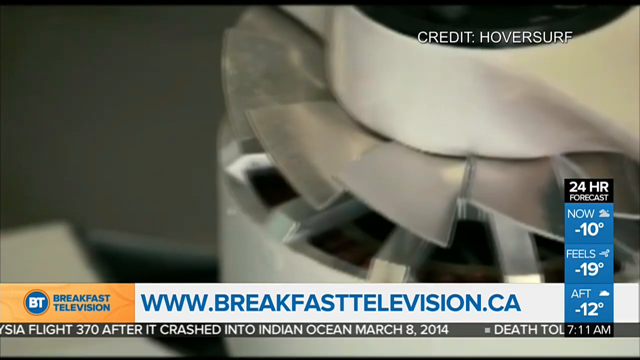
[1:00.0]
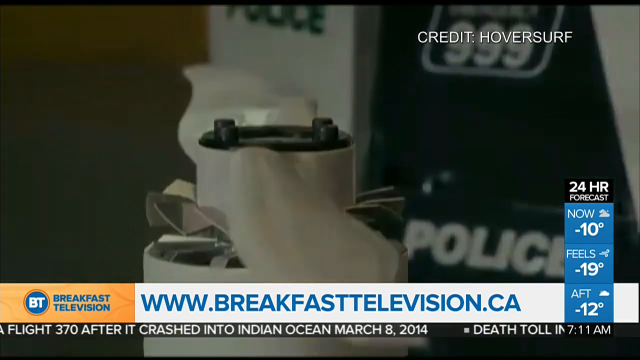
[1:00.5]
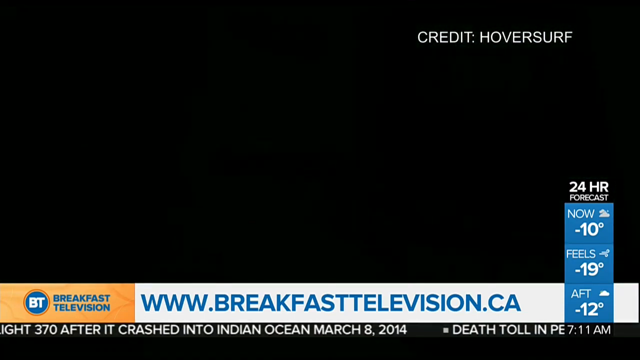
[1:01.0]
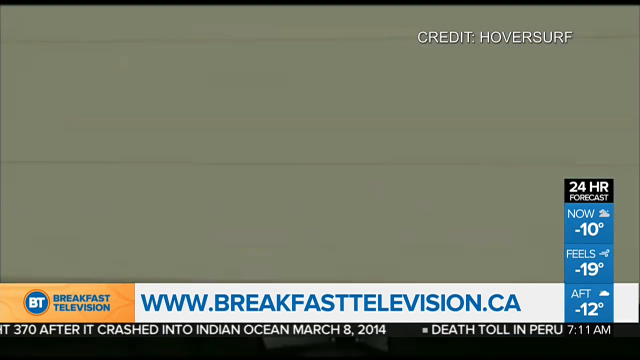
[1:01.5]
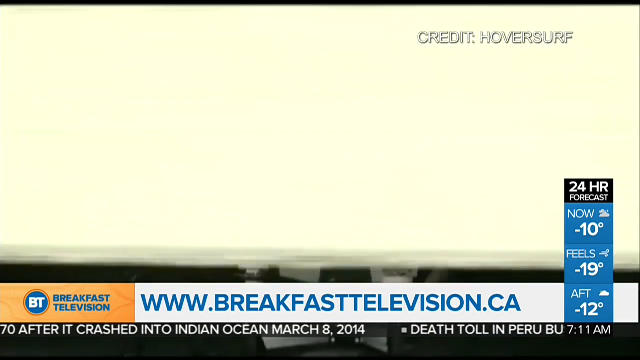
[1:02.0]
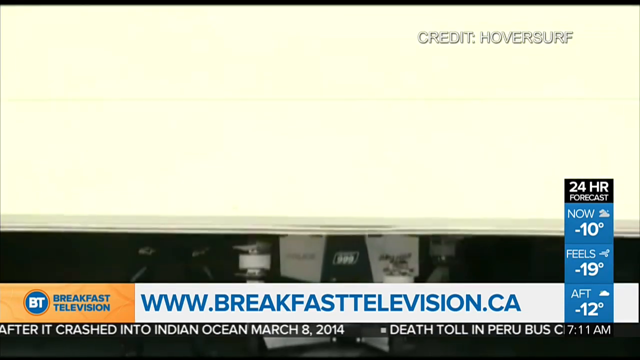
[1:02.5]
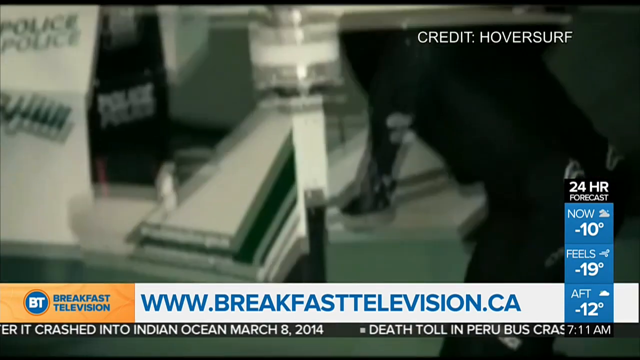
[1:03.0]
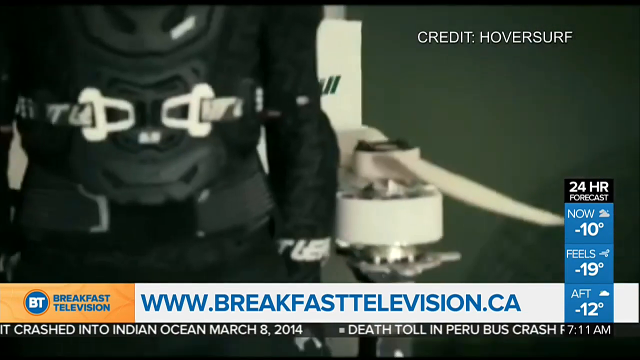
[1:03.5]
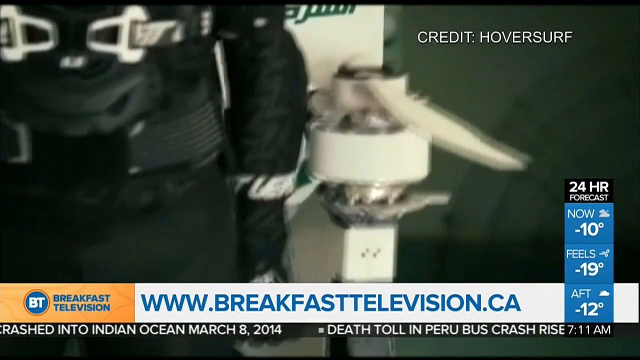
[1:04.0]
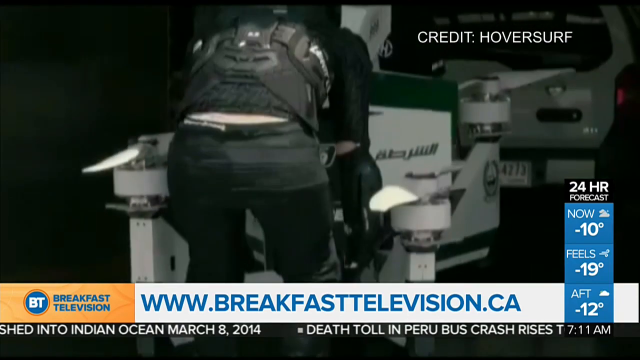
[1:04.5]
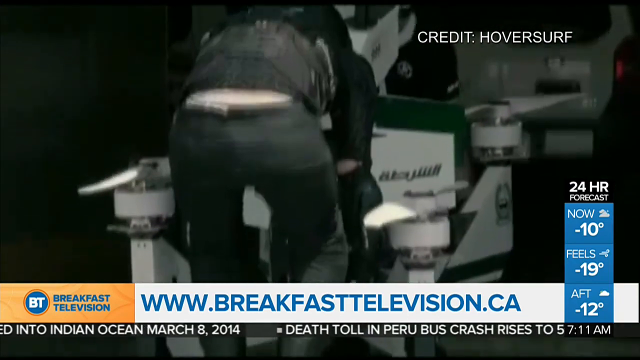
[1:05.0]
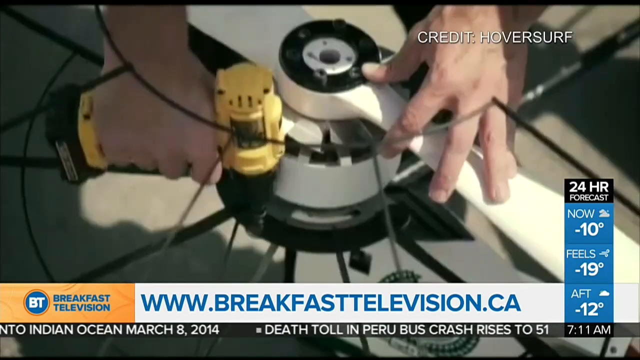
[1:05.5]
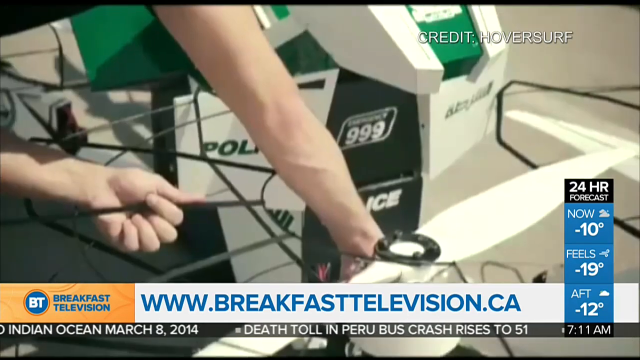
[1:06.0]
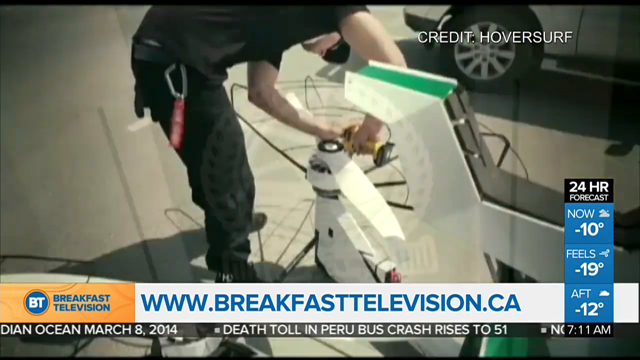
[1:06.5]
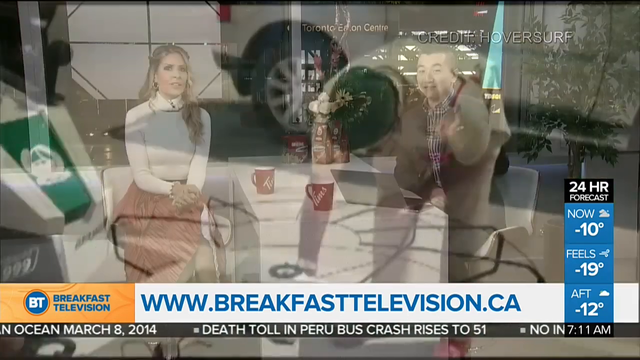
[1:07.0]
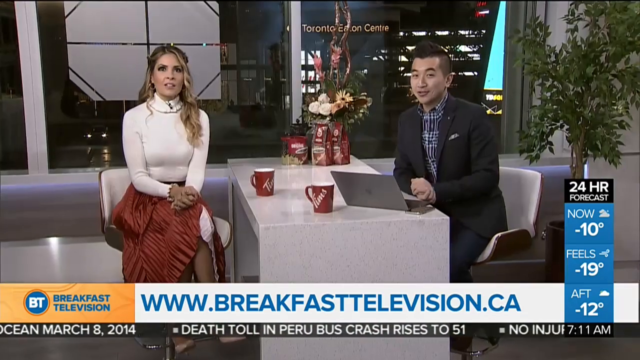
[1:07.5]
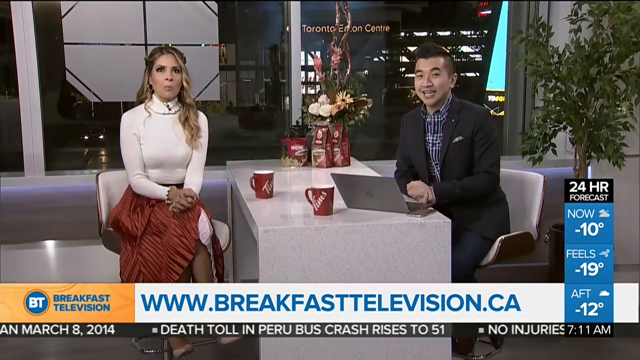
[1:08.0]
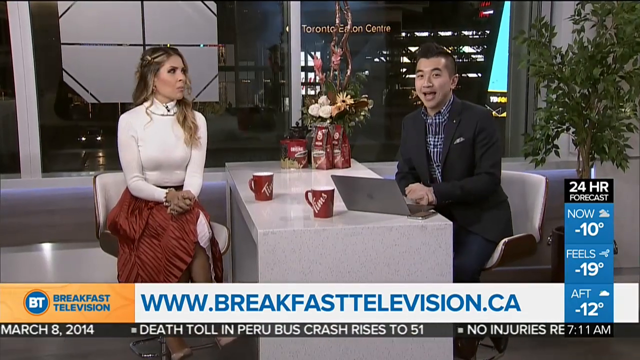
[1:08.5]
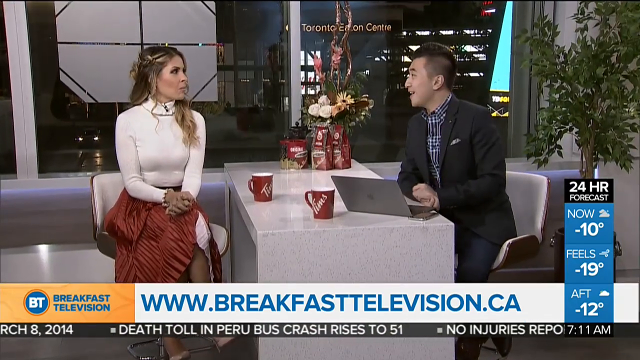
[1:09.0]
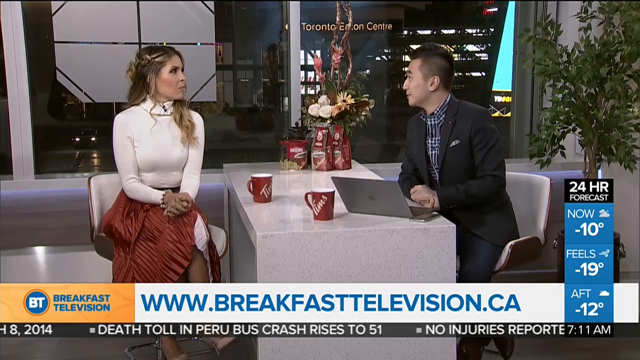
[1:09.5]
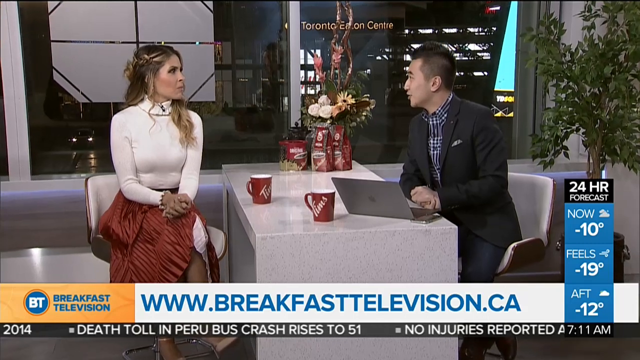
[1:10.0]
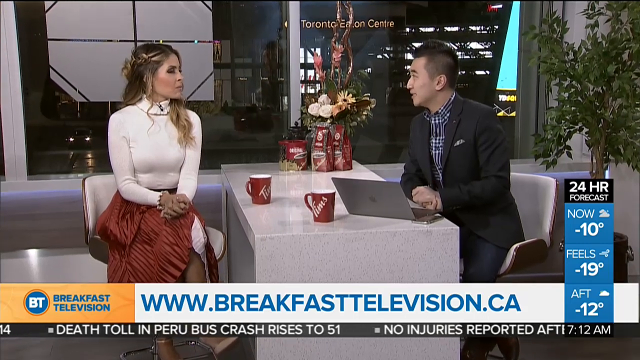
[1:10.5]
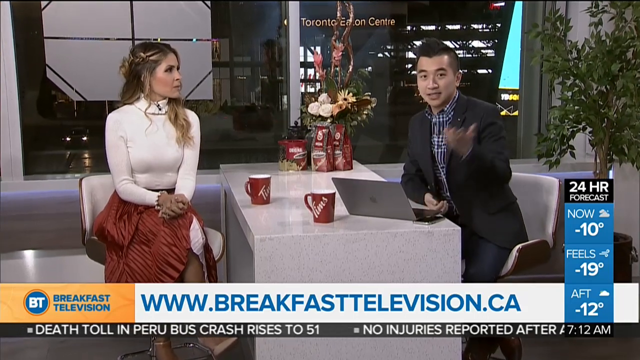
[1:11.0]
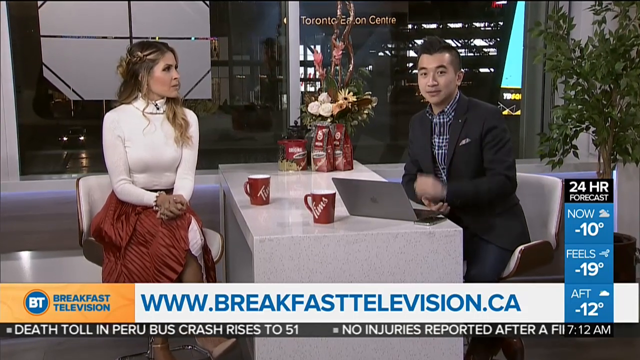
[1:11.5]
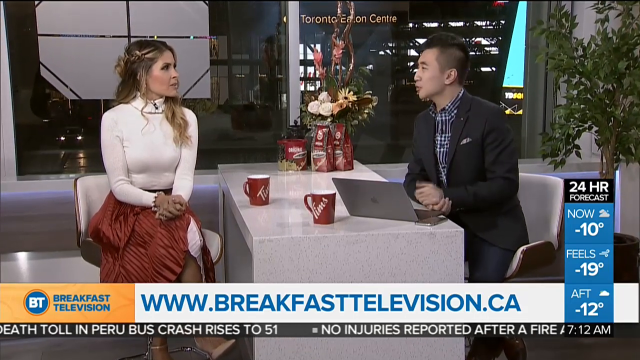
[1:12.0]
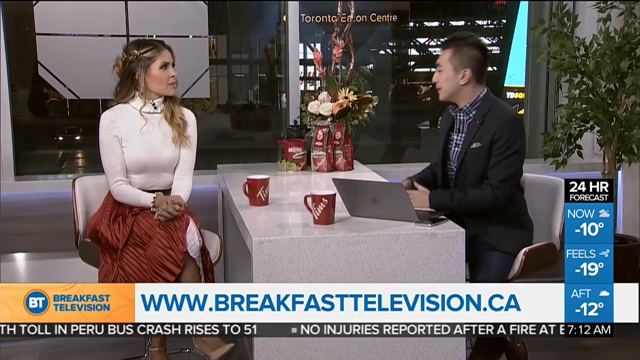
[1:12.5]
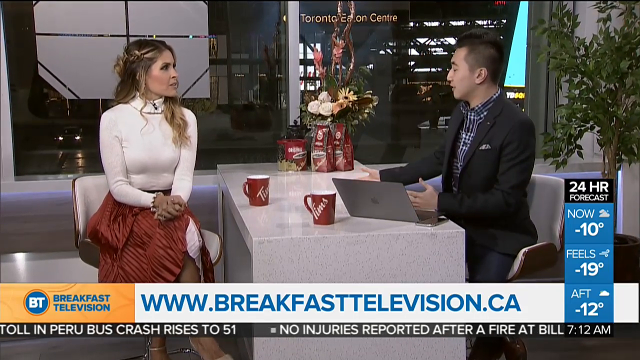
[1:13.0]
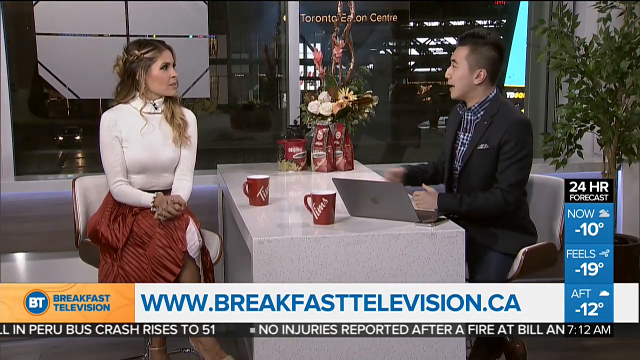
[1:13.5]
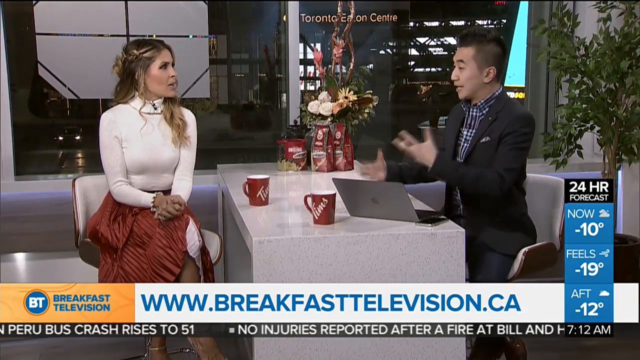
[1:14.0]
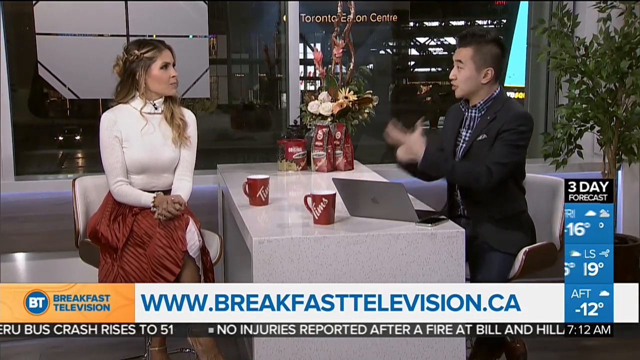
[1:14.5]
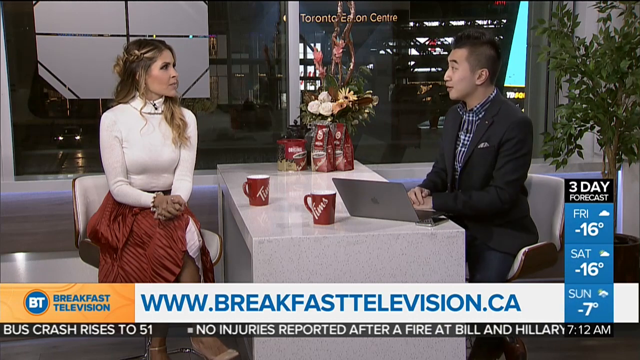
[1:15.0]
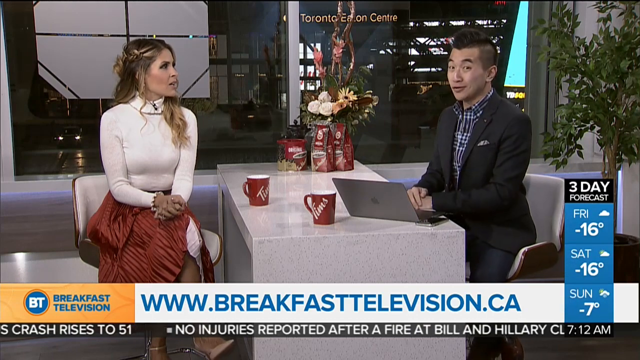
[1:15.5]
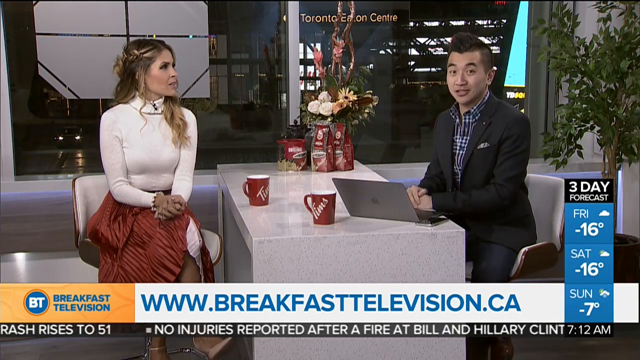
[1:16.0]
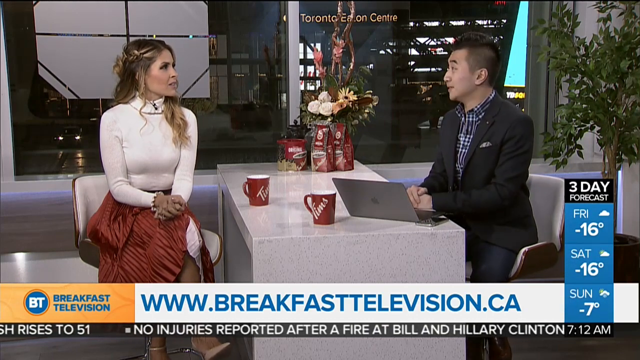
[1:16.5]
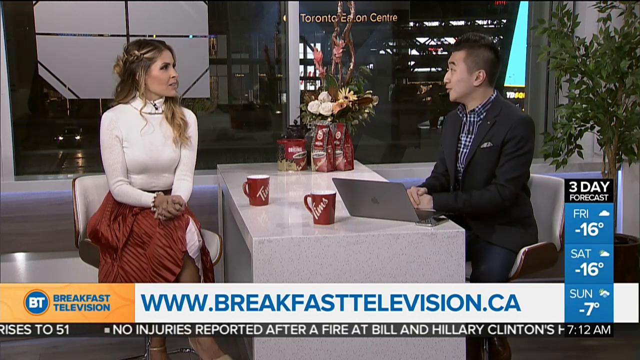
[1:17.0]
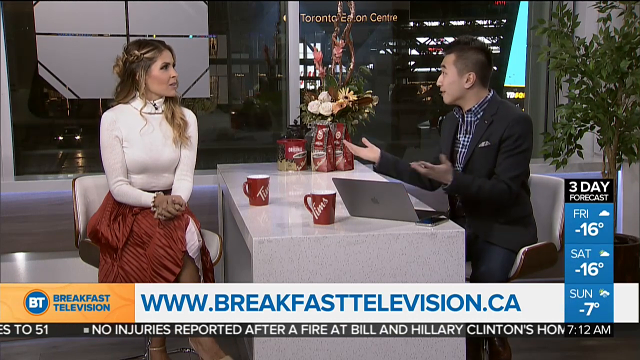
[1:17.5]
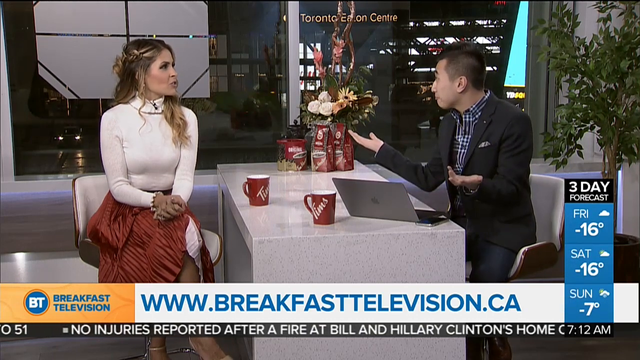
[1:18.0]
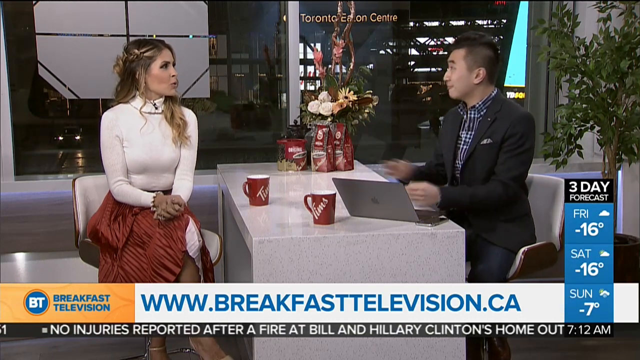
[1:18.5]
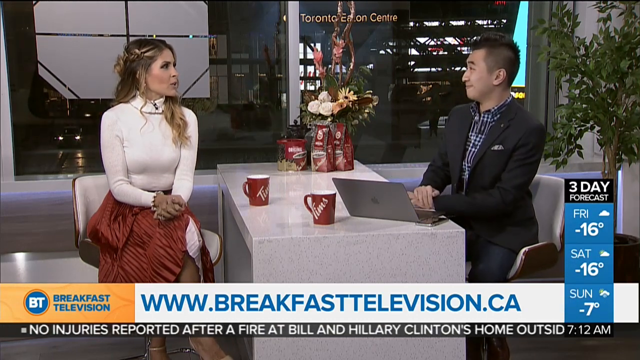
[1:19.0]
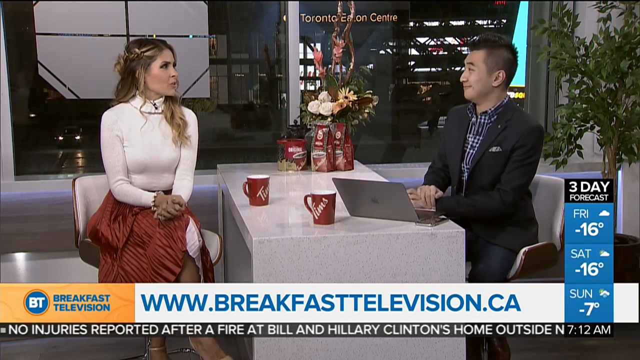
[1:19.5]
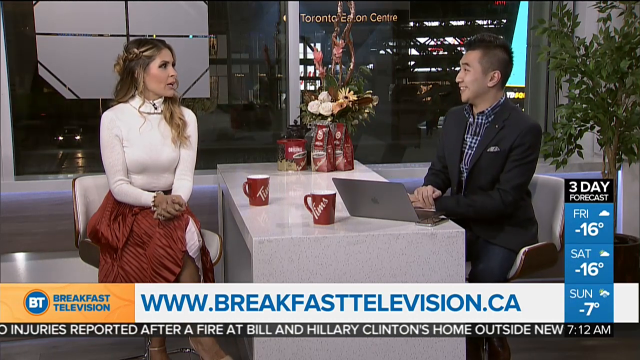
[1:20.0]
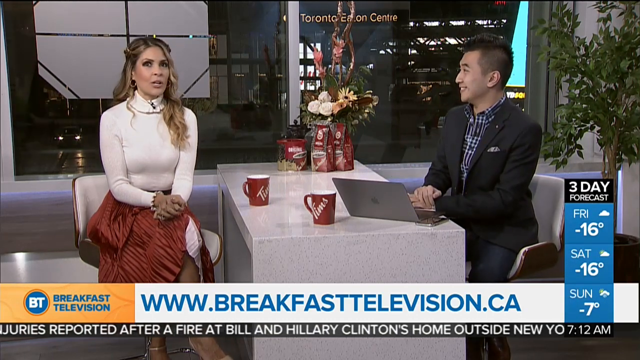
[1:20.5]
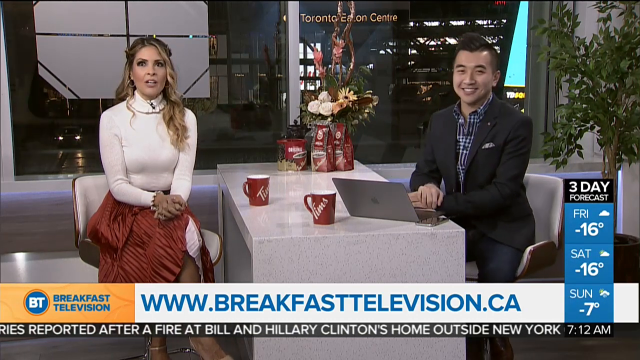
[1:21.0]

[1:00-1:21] A line of text in the top right reads "credit:oversurf". The weather graphic in the lower right is still on, now showing a "24 hour forecast": now negative 10 degrees, feels like negative 19 degrees, and negative 12 degrees in the afternoon. Text below reads "www.breakfasttelevision.ca". The same two men from the start of the video carry the hoverbike, seemingly from a pickup truck, and the person tightening screws with his right hand is seen tightening them; this seems to be a repetition of the earlier footage. The camera then turns back to the news presenter and the interviewee: the woman in the white top and brown skirt and the man in the black suit with a checked shirt. Two mugs are still on the table, a few artificial flowers are on the far corner of the table, and there is an artificial tree behind the male presenter. They are sitting on white chairs.